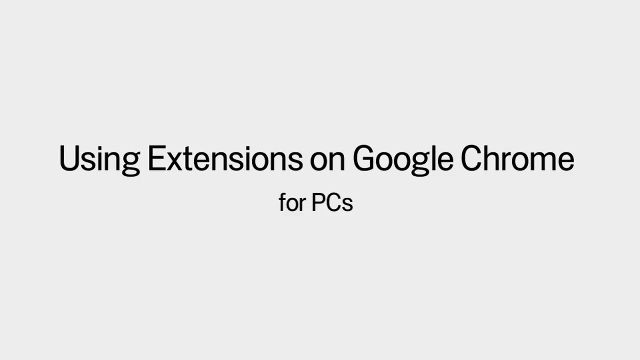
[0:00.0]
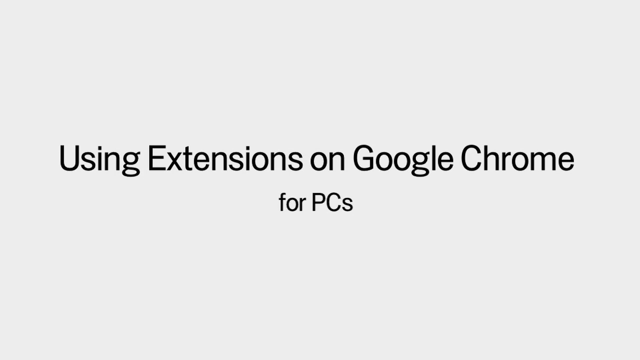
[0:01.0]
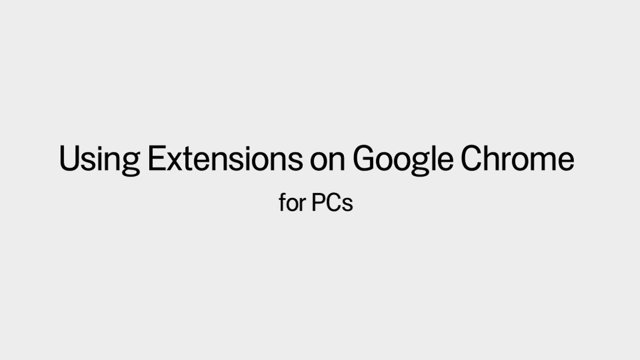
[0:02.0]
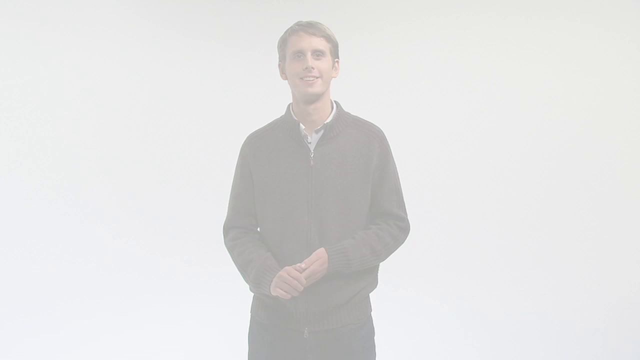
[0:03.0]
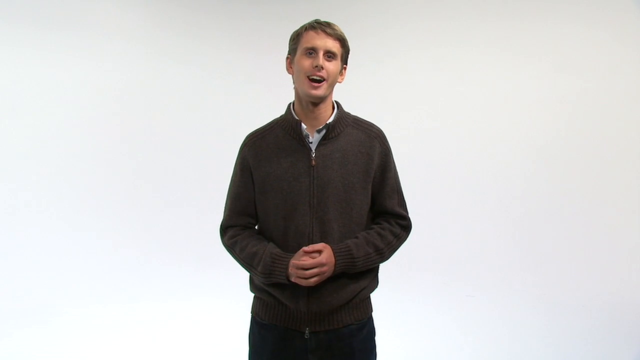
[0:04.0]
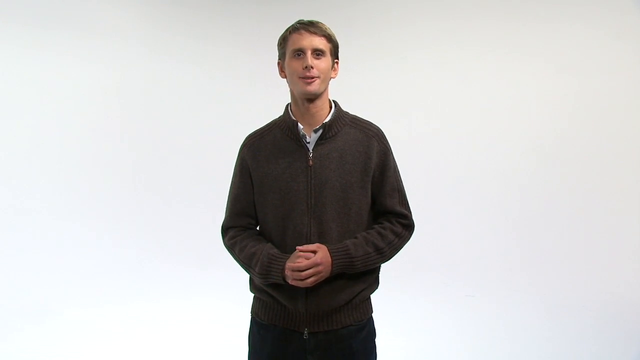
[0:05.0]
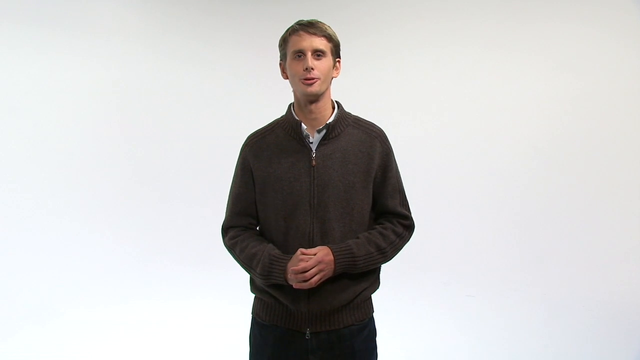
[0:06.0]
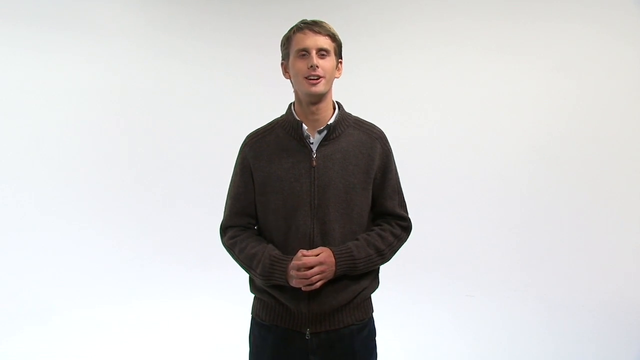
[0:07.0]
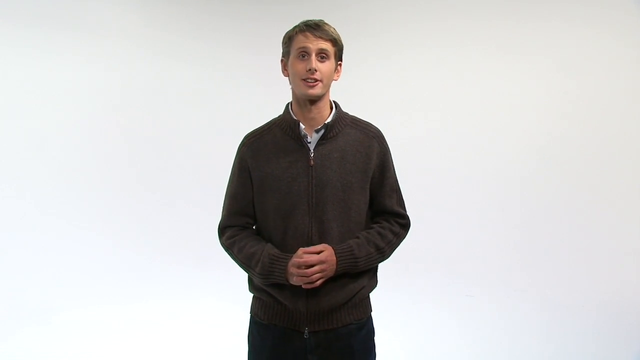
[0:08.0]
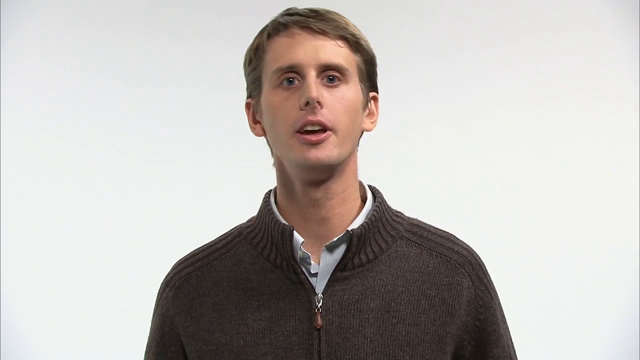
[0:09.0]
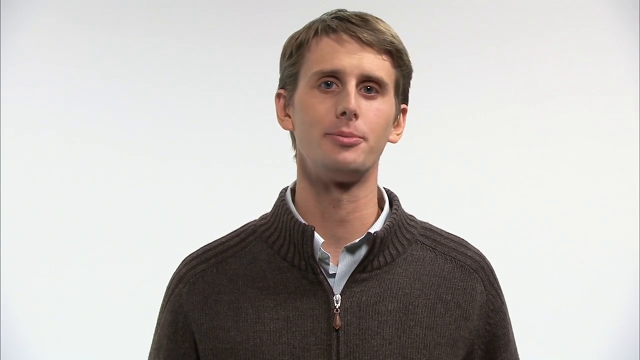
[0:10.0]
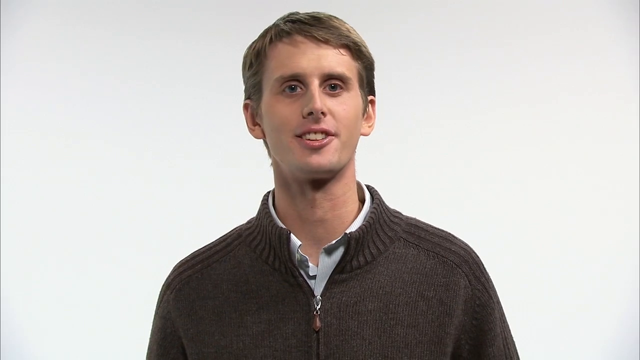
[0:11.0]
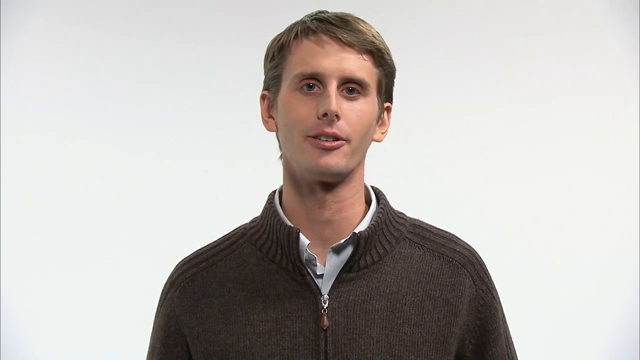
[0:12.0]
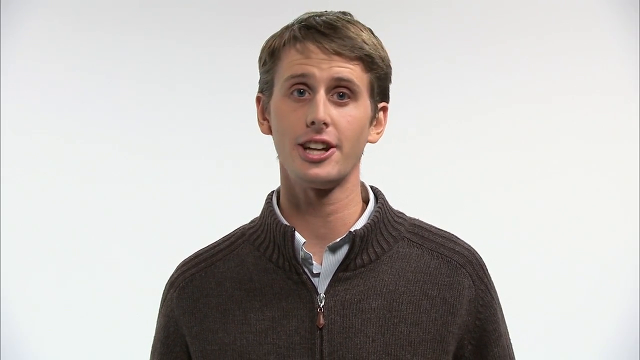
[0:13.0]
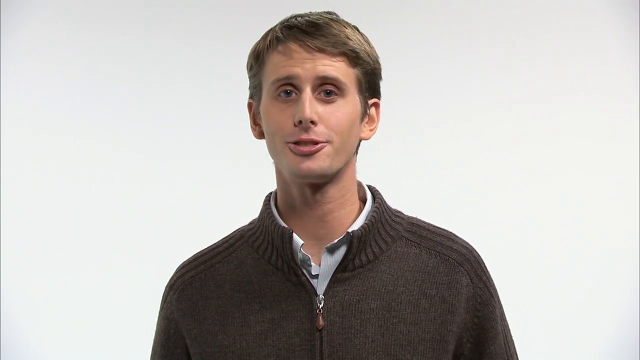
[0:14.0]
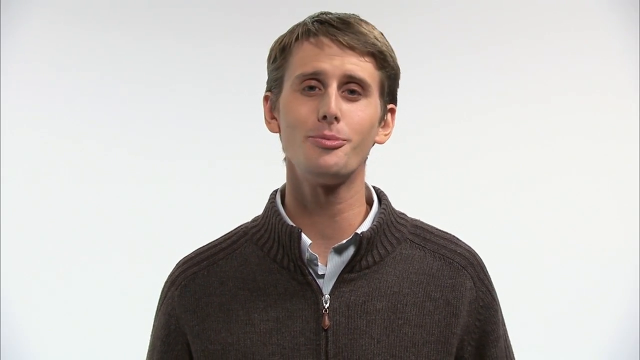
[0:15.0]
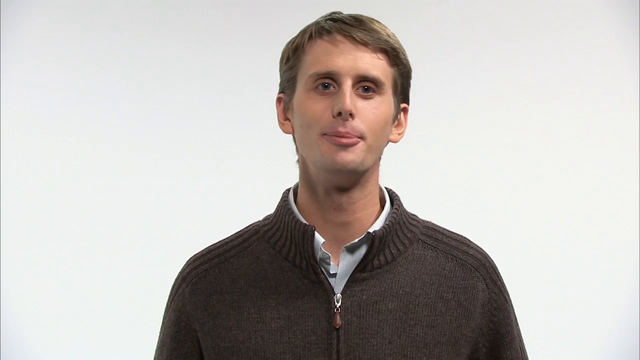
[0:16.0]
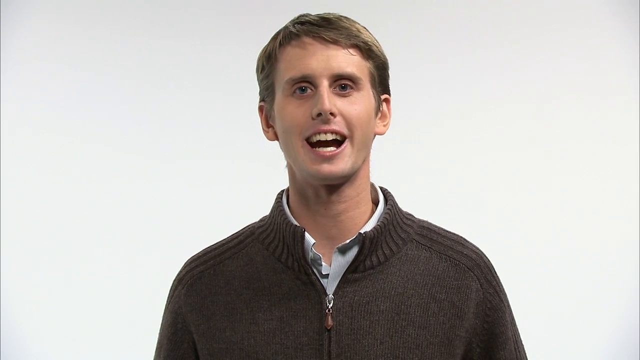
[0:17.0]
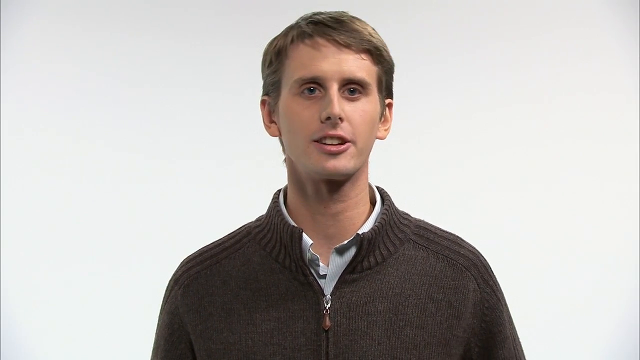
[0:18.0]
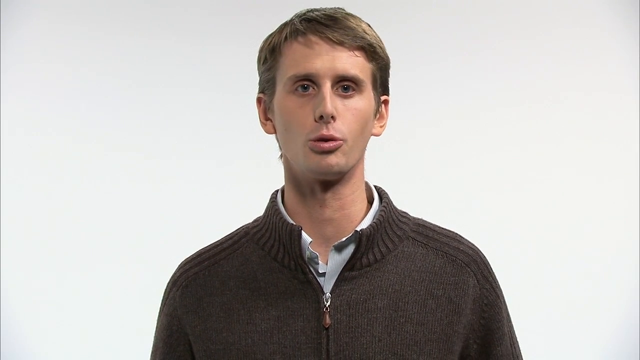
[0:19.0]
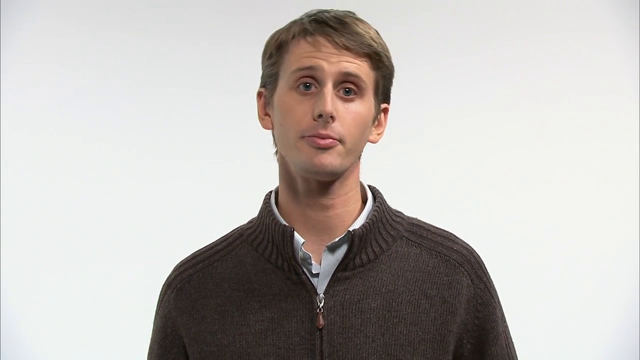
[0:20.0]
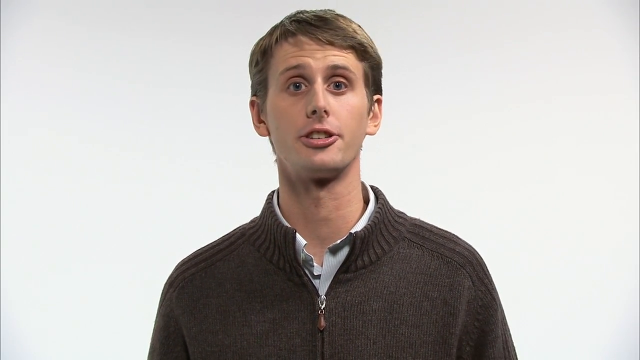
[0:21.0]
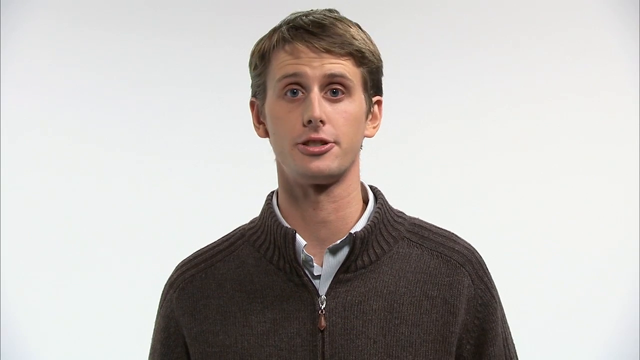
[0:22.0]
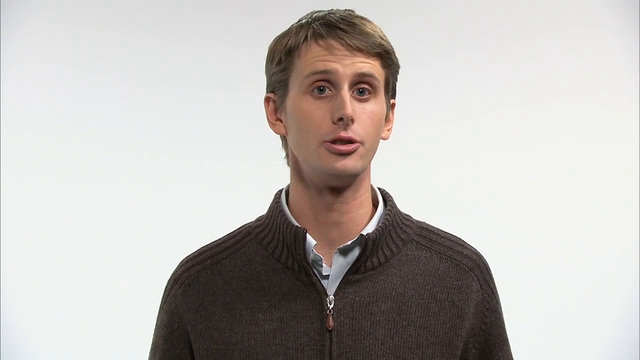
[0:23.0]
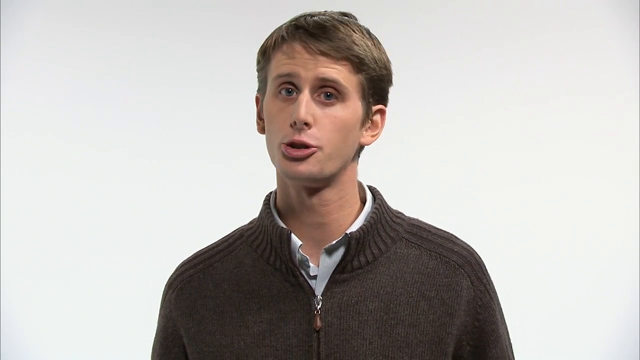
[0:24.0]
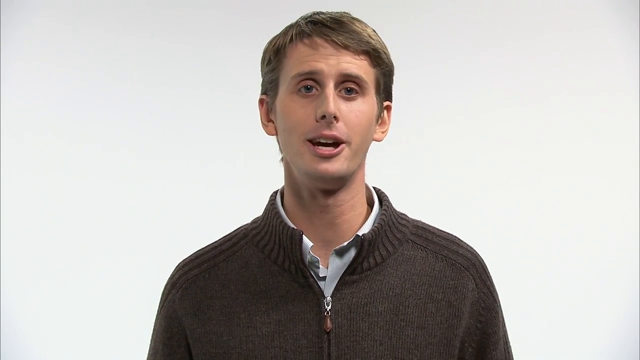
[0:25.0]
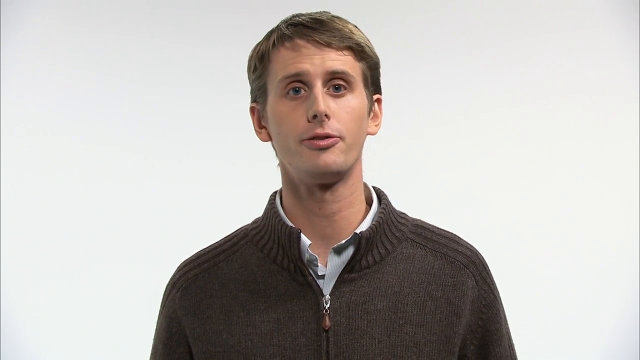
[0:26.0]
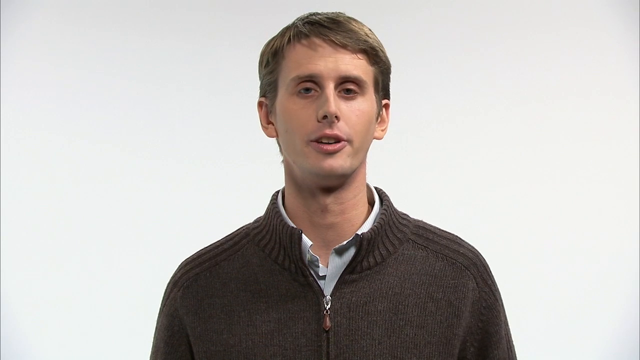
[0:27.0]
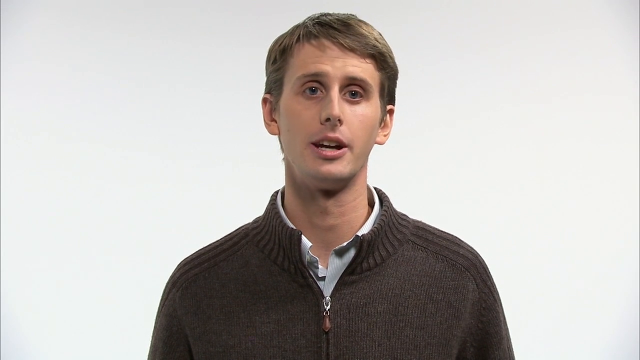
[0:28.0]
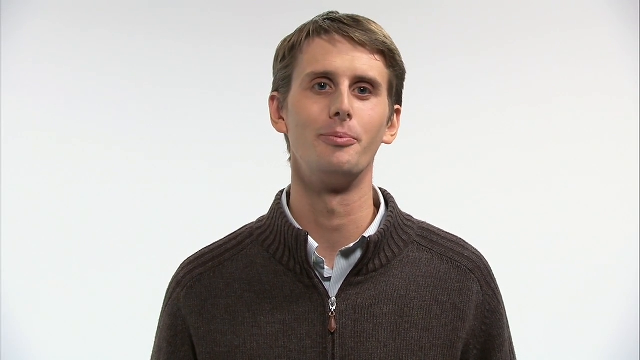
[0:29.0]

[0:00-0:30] The video opens with text on the screen that says "using extensions on Google Chrome for PCs." That screen fades away and a man appears, looking at the screen and smiling as he moves his hands around, then puts his right fist into his left hand. He keeps talking to the screen. The camera then closes in on him until only his face and the top of his body are visible as he moves his head around and smiles a lot while talking. He keeps looking straight forward and appears to probably be reading off a card. He wears some kind of sweater with a dress shirt underneath, and the background is completely gray. He continues to look at the screen and talk, shaking his head a little. The screen then changes to a website in the shape of a giant tab that looks like google chrome.com. A lot is going on in the tab: there is text on the left side, including a category called extensions, and on the right side a weather icon and some kind of bookmark icon.